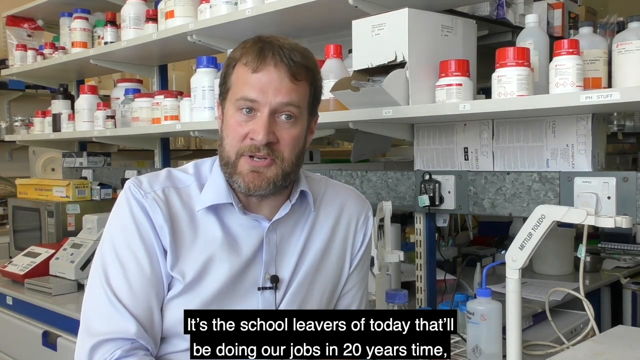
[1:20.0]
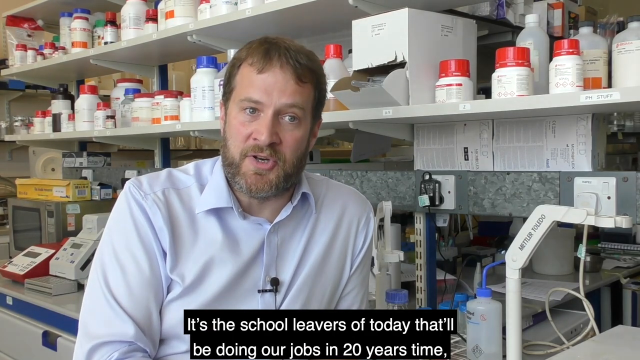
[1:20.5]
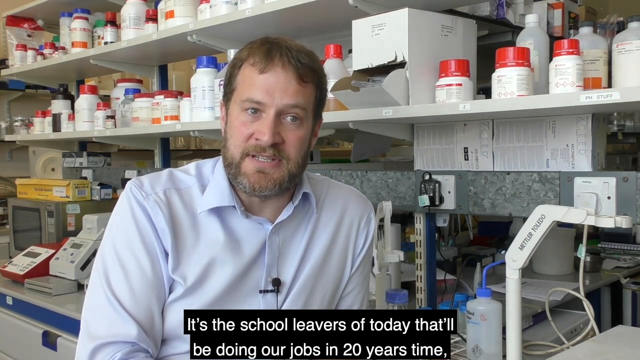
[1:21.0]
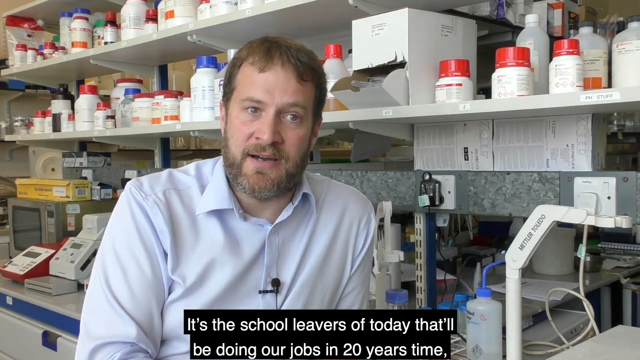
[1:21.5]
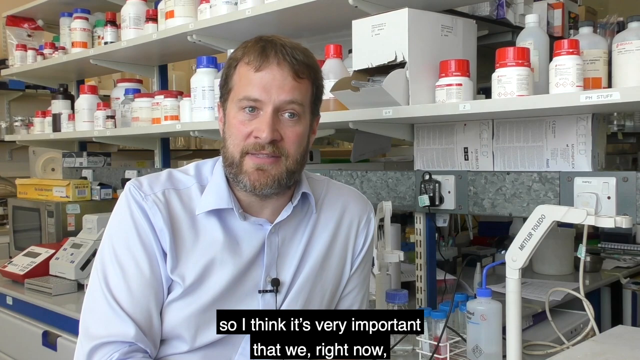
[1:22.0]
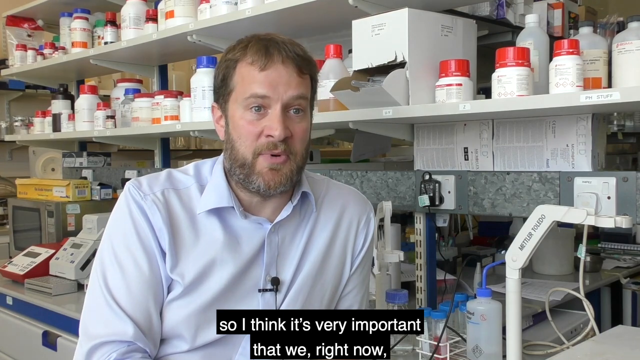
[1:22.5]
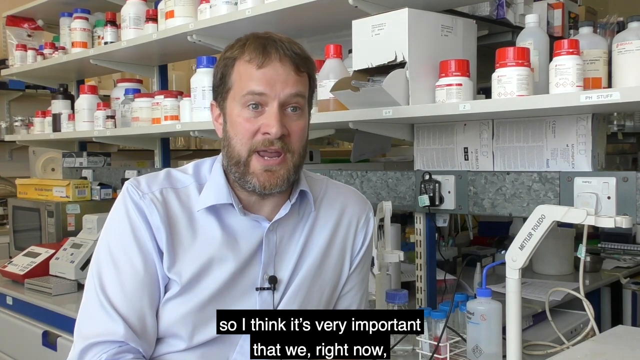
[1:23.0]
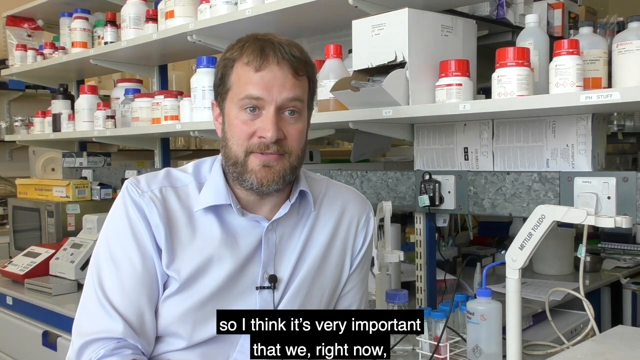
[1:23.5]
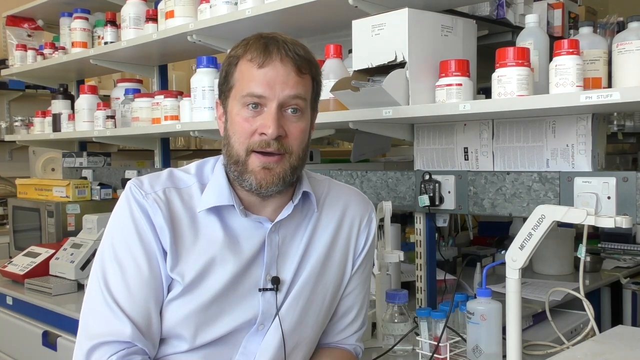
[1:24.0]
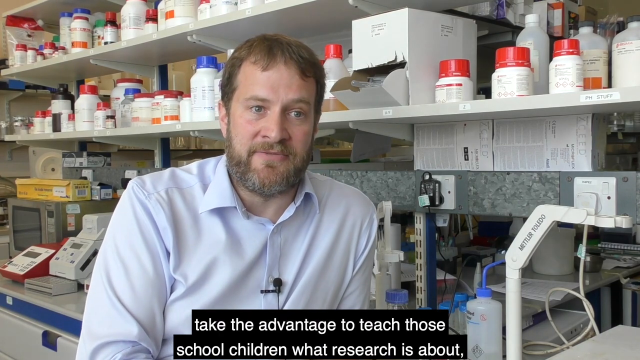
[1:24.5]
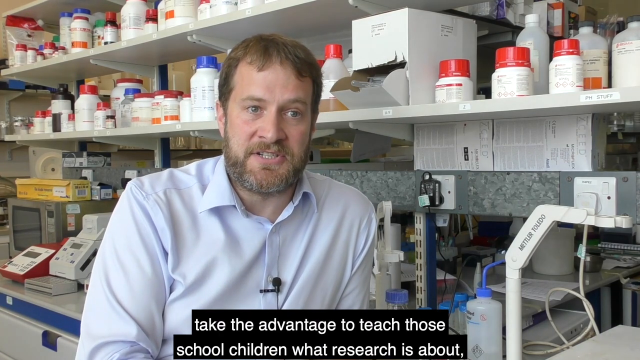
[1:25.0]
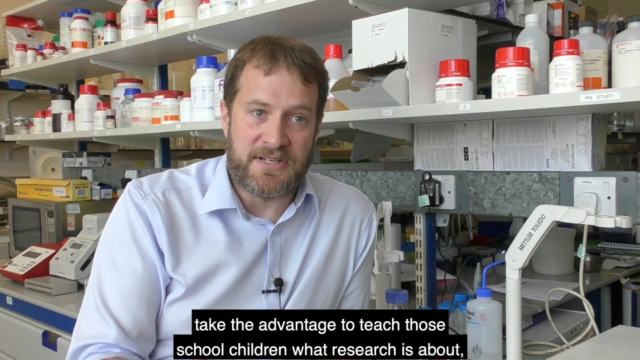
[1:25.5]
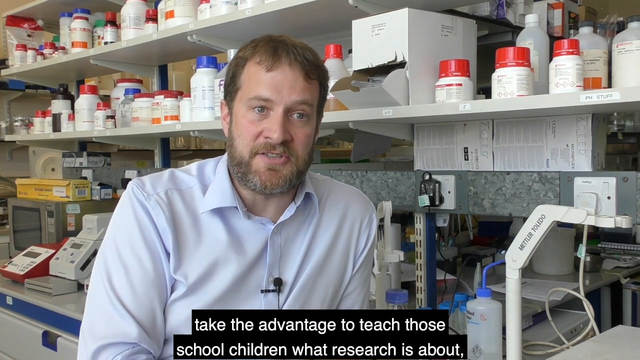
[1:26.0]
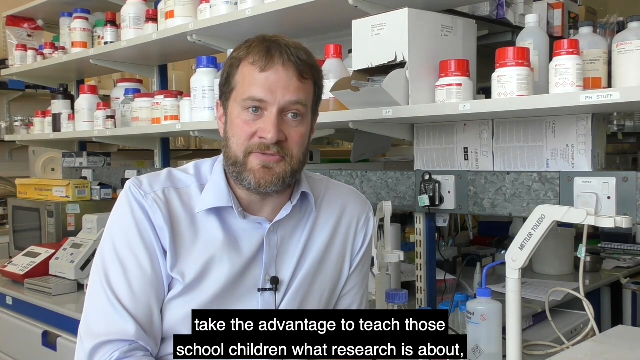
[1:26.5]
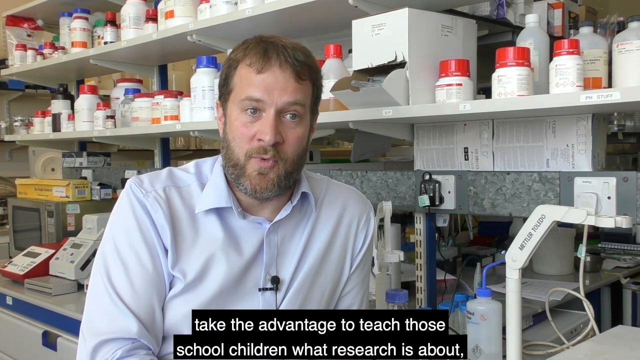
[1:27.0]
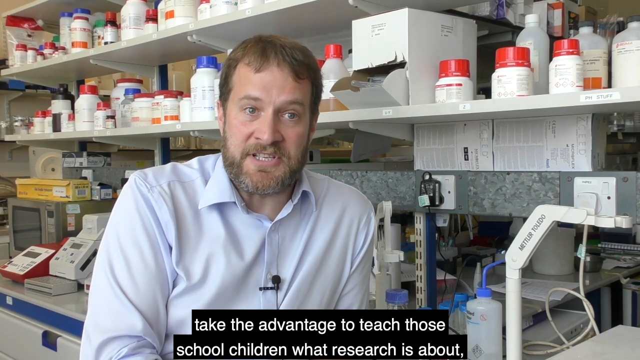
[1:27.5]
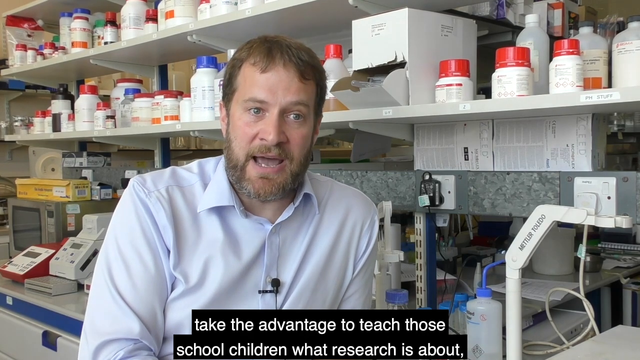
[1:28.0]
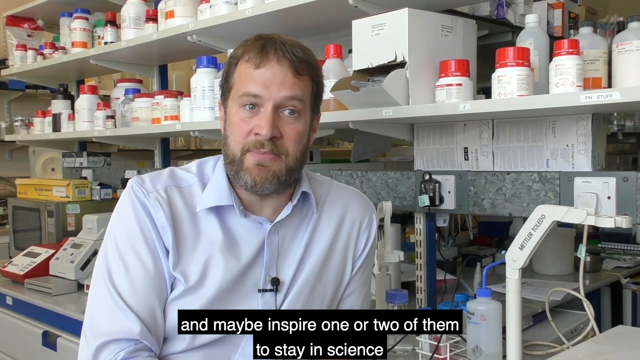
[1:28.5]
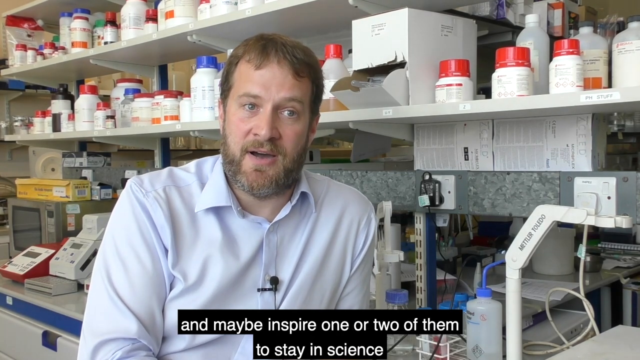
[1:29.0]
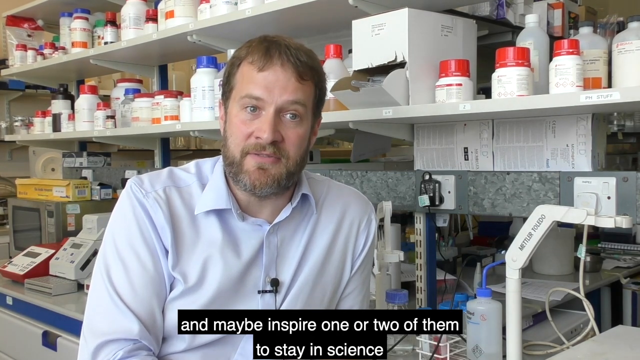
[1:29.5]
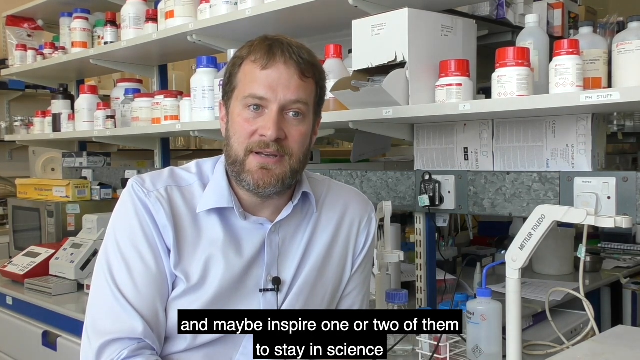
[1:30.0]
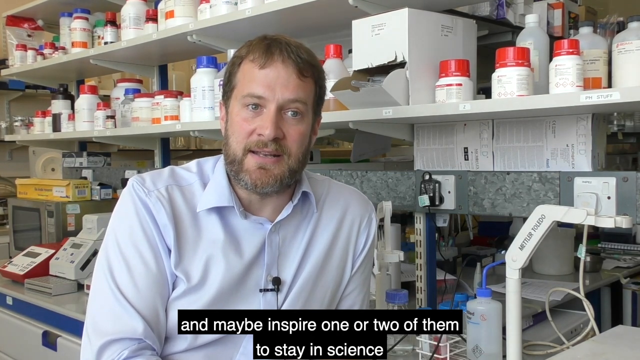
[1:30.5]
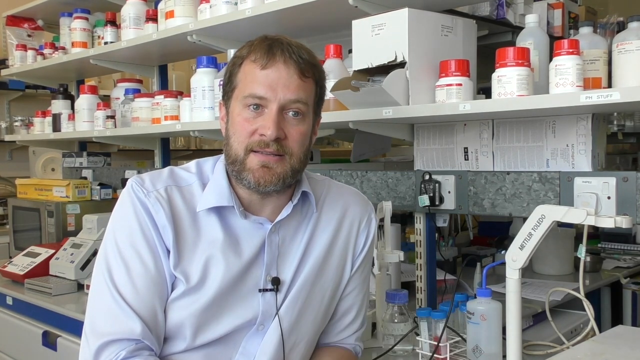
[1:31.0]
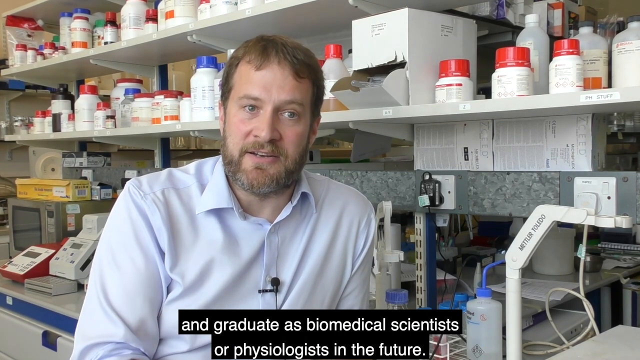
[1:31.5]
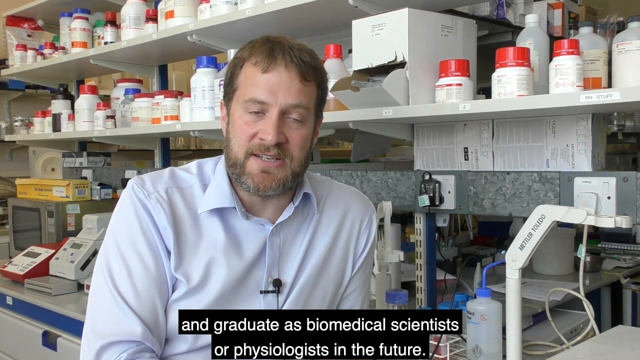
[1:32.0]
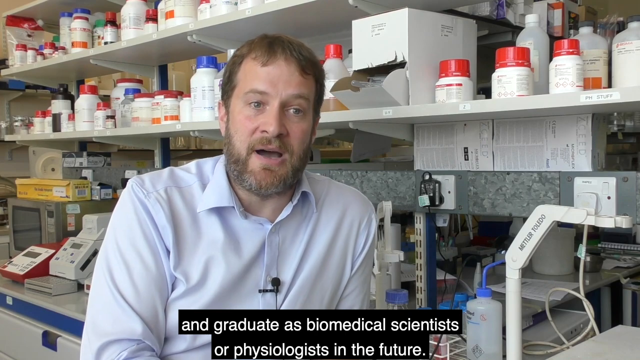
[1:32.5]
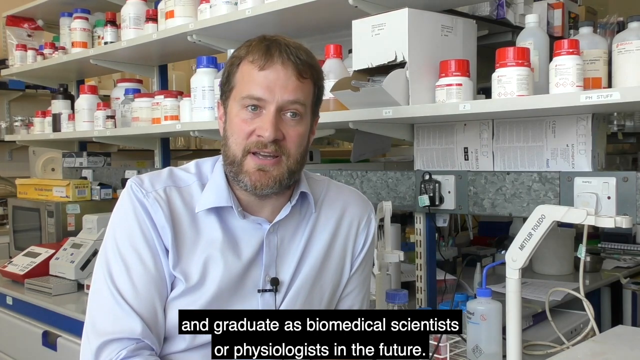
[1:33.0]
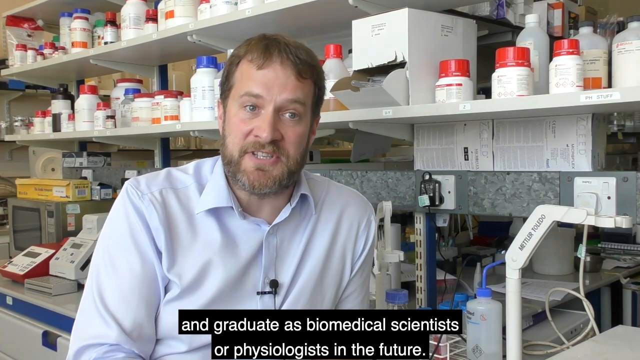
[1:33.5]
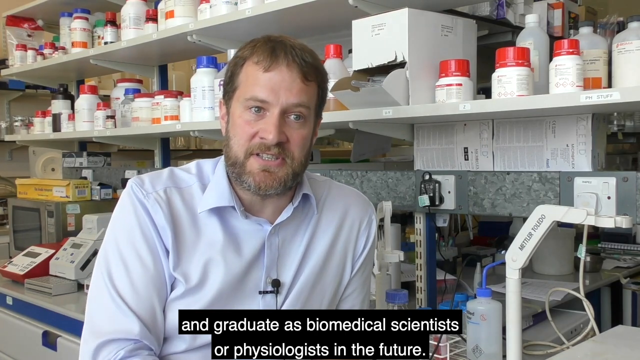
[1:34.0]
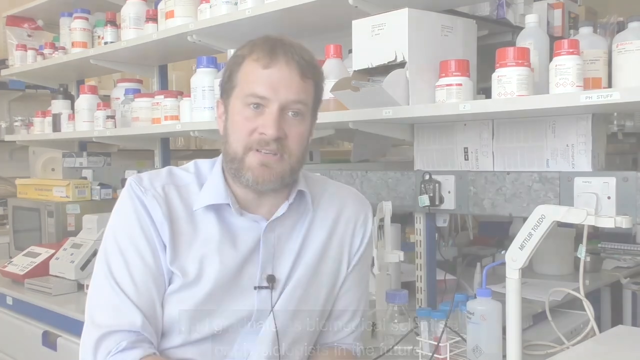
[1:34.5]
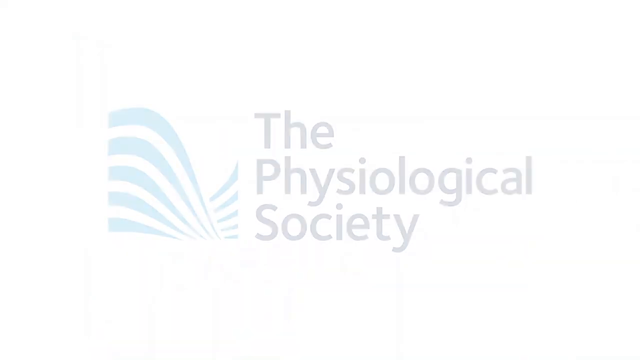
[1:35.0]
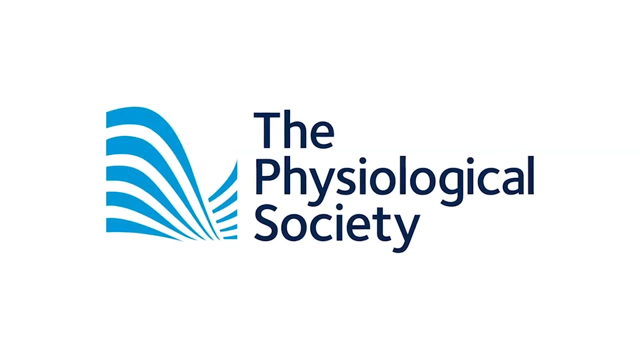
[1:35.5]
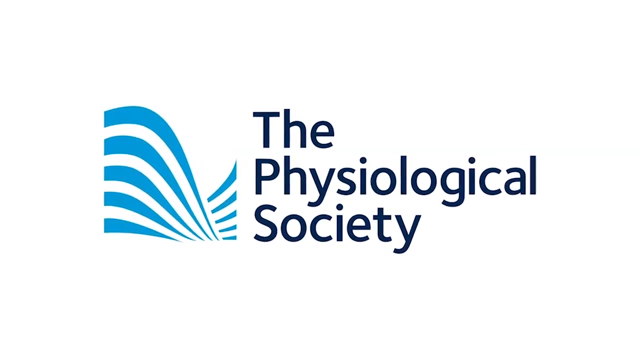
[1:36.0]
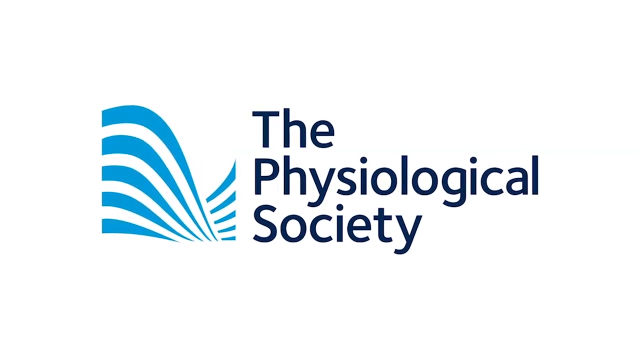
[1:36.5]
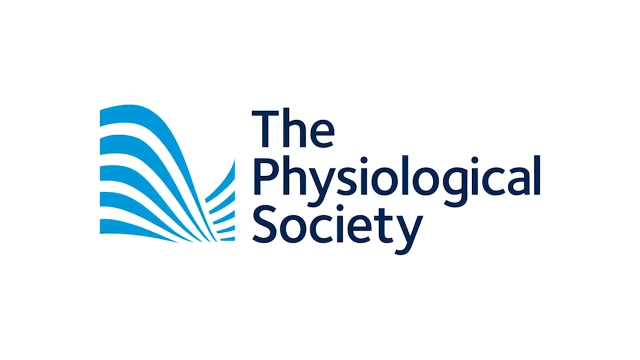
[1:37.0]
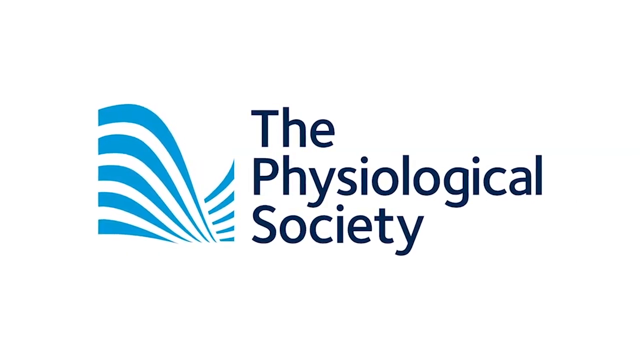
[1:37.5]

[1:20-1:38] James sits in the same position as when he was first introduced, and his name, title and workplace appear on screen again. At the end, a white screen shows "the Physiological Society" written on it, with an icon next to it made of some blue kind of waves that seems to be the society's logo. This seems to be a promotional video for the Physiological Society.